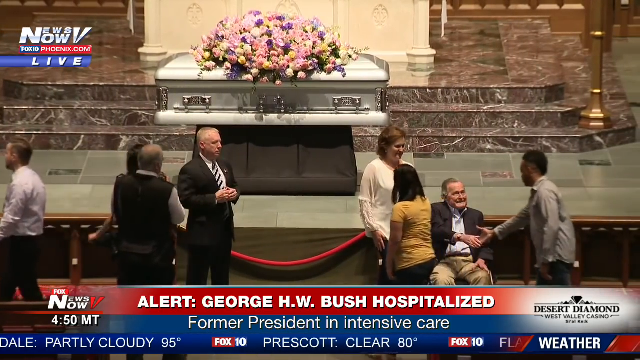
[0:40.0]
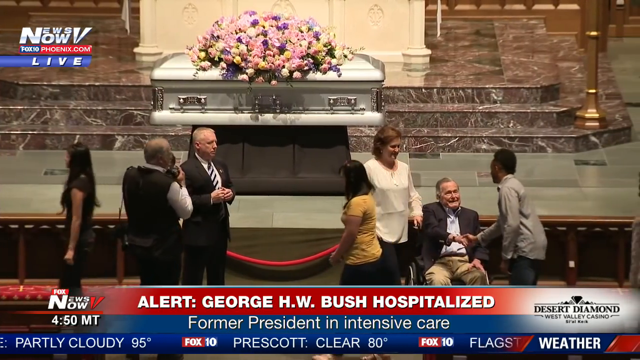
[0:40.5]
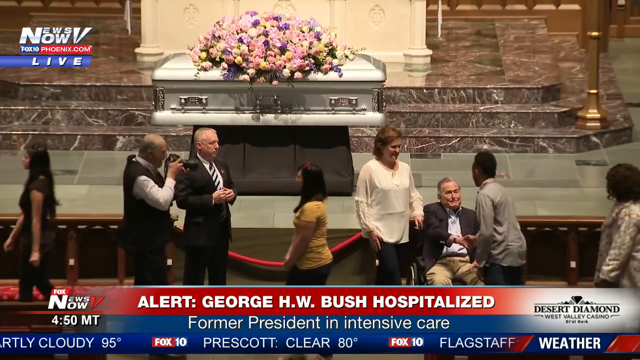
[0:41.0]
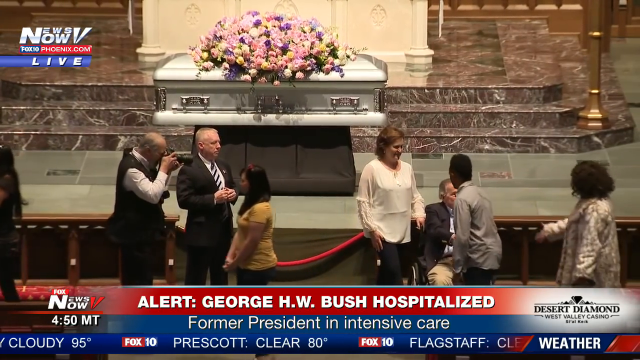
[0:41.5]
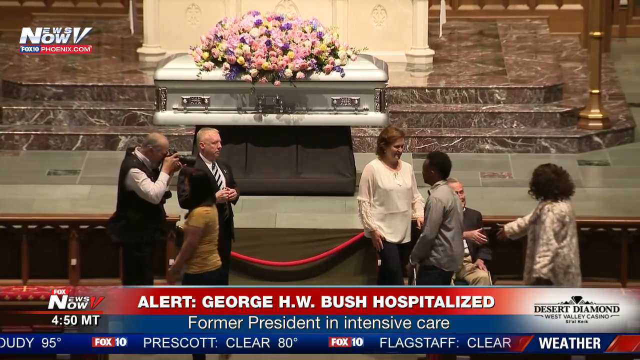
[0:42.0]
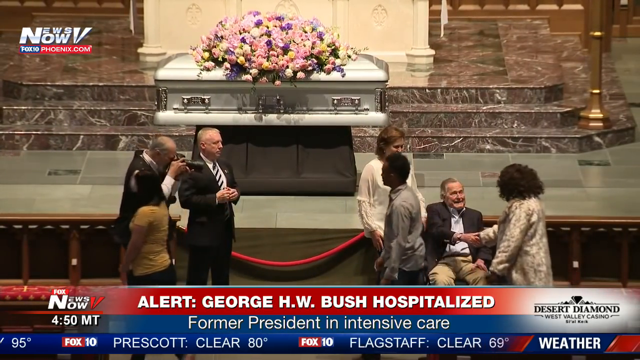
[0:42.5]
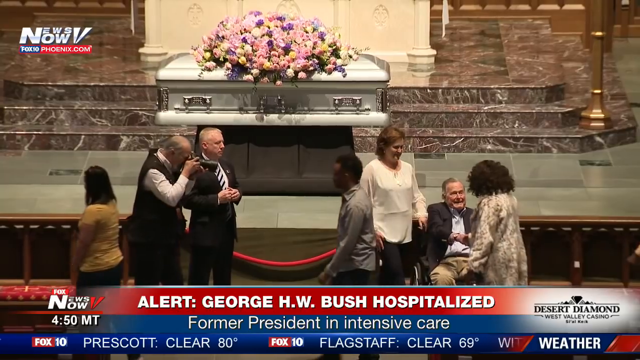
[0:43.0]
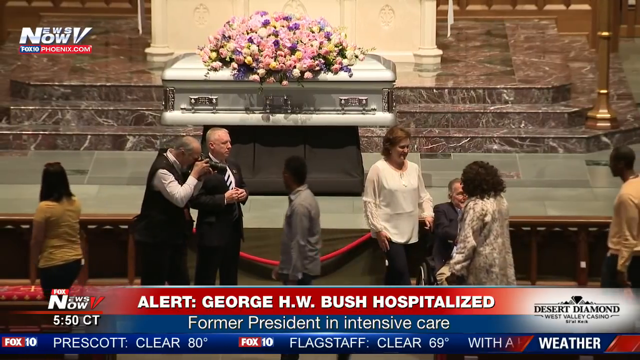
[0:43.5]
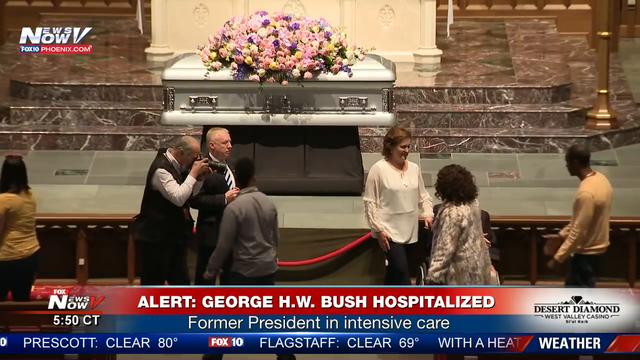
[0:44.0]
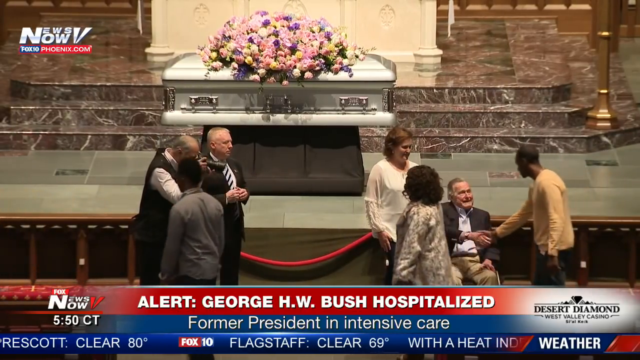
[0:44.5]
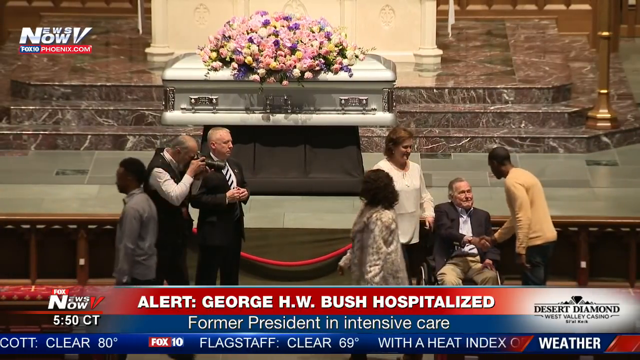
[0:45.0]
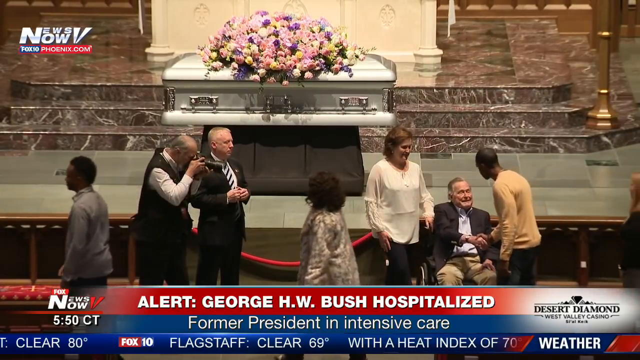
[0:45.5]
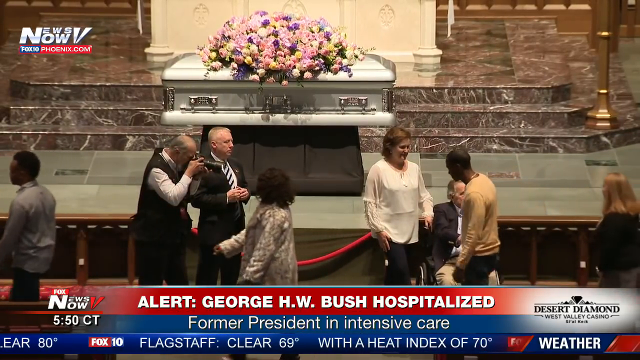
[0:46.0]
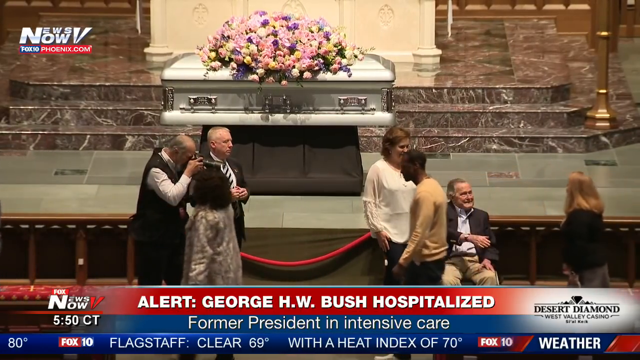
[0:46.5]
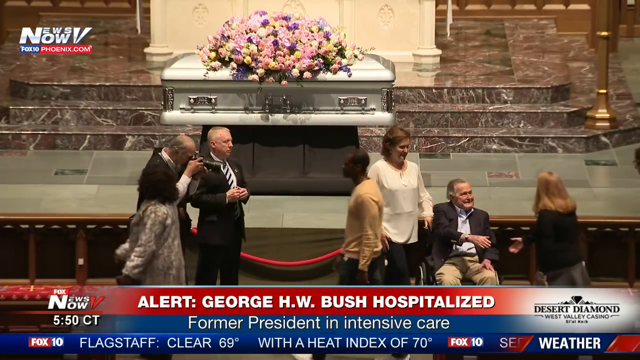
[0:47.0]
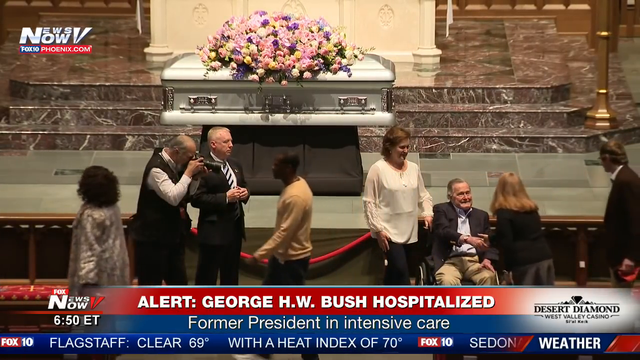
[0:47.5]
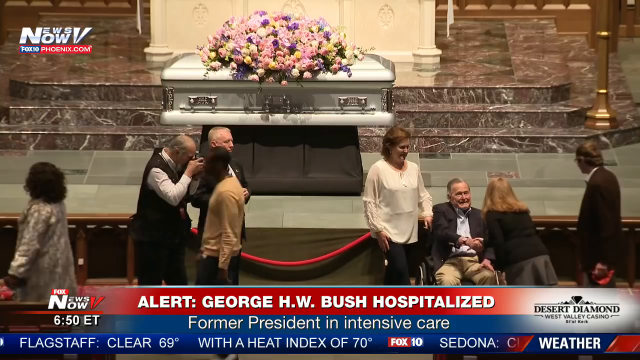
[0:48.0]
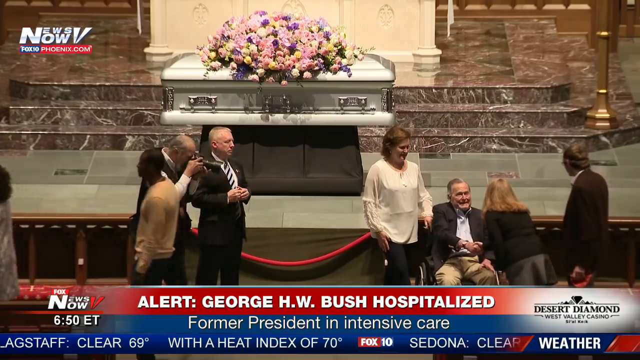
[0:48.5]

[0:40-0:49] Different individuals shake the hand of George H.W. Bush as a line of people comes up to him. A logo at the top left of the screen says "News Now, Fox 10, phoenix.com." Behind everyone is a stage with three stone steps and a silver casket held up by a brown pedestal and topped with multicolored flowers that are pink, purple, and yellow. A red banner with white text at the bottom of the screen says "alert George H. W. Bush hospitalized," and below it a blue banner with white text says "former president in intensive care." To the left of that, text says "Fox News now, 450 MT," and on the right-hand side it says "Desert Diamond West Valley Casino."